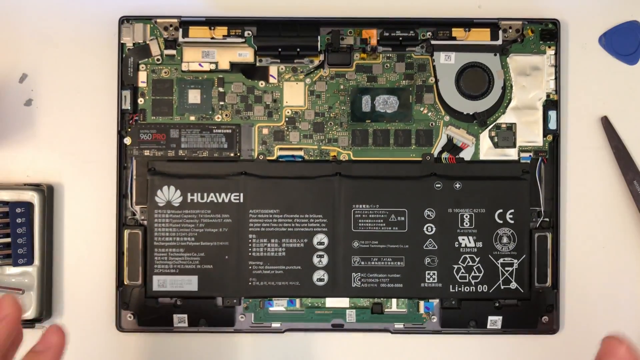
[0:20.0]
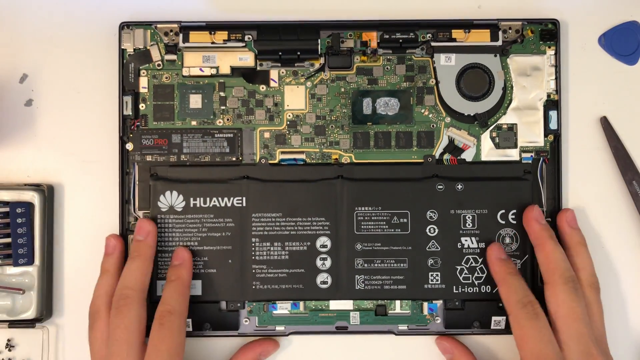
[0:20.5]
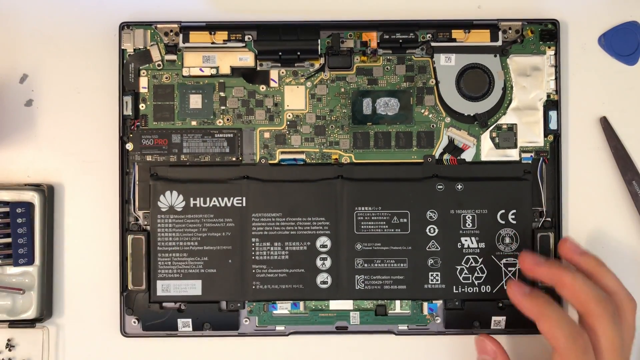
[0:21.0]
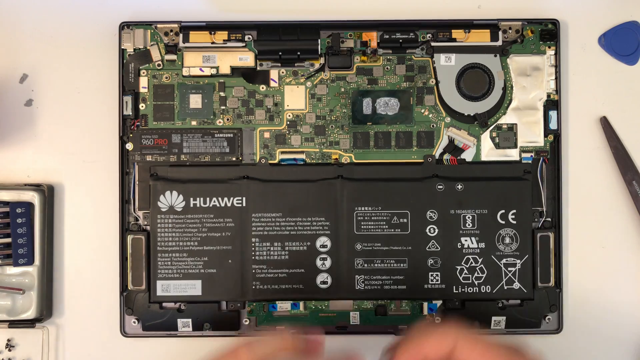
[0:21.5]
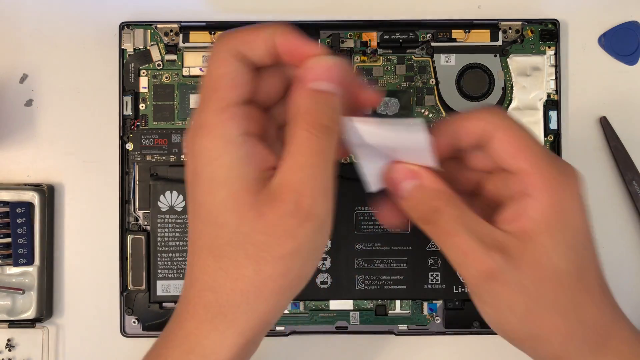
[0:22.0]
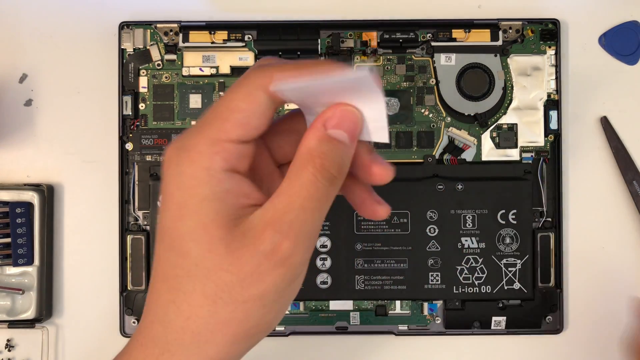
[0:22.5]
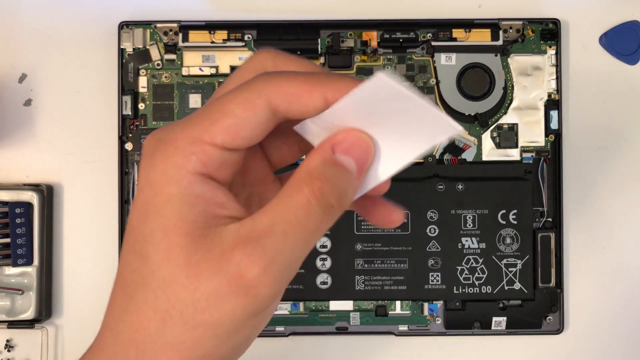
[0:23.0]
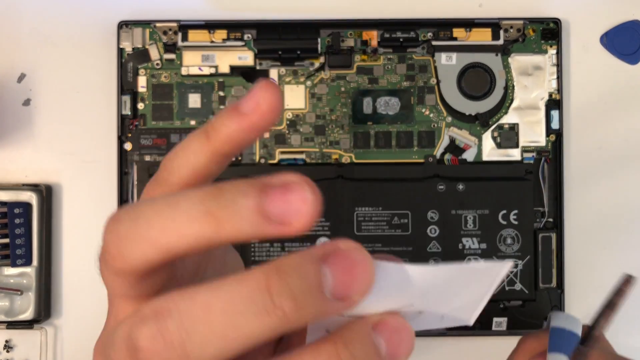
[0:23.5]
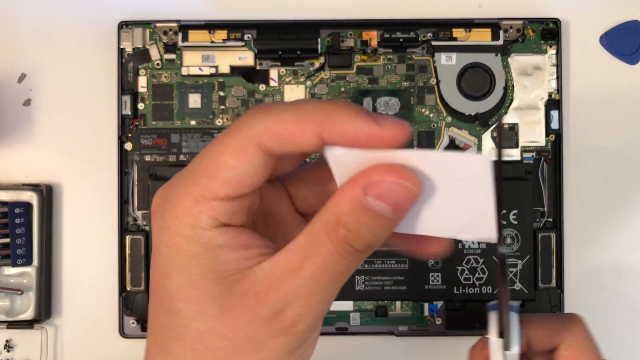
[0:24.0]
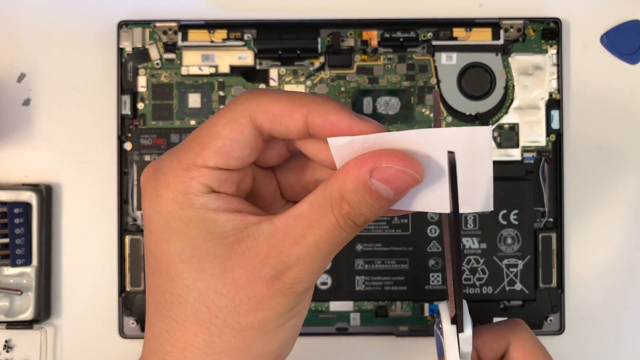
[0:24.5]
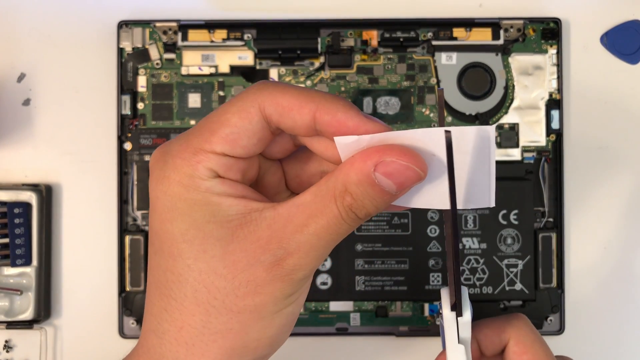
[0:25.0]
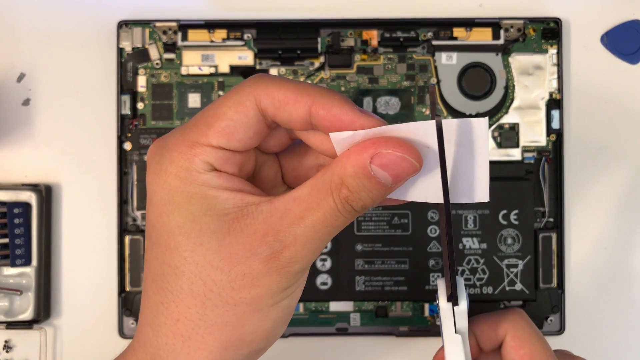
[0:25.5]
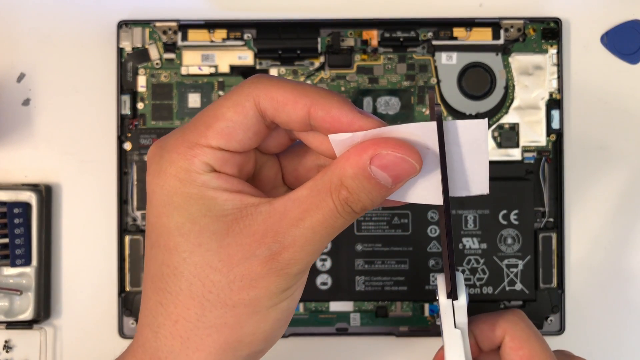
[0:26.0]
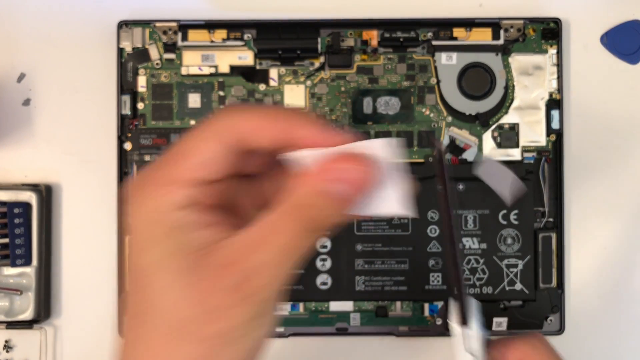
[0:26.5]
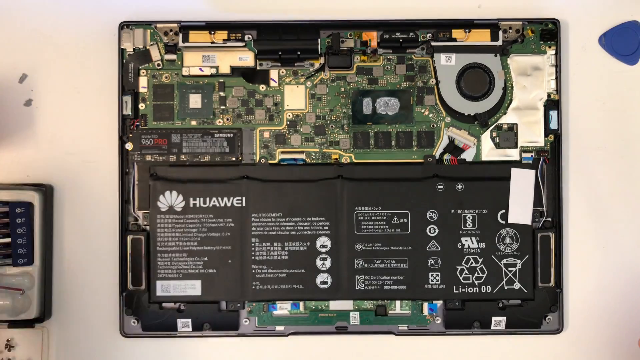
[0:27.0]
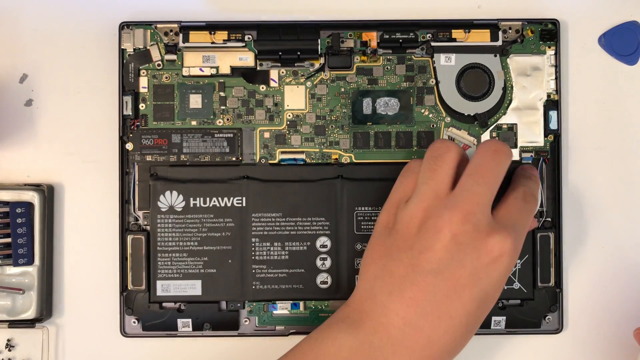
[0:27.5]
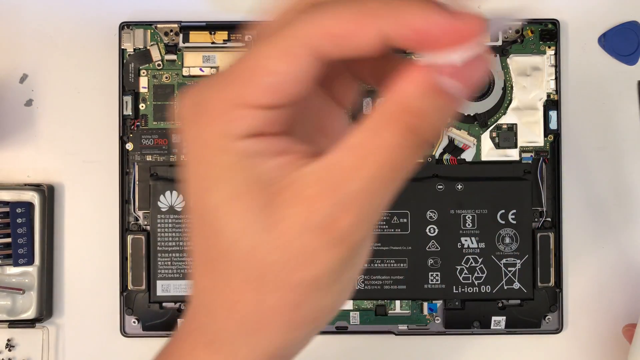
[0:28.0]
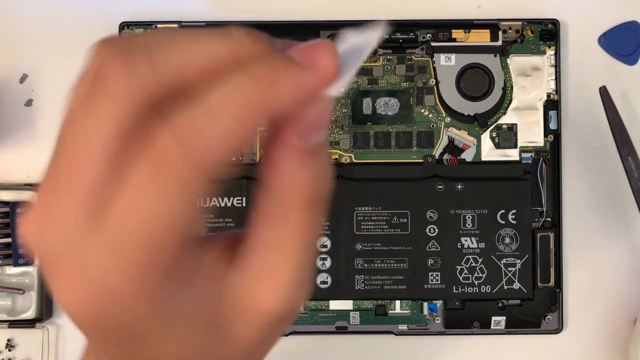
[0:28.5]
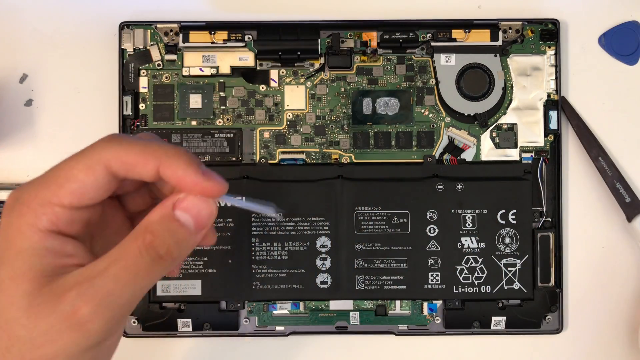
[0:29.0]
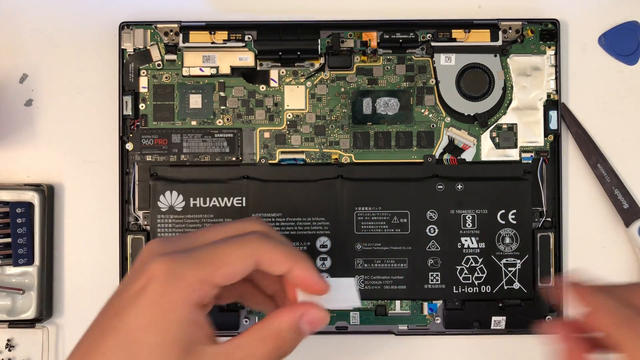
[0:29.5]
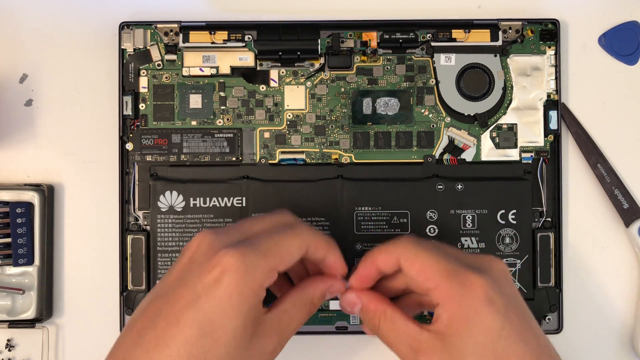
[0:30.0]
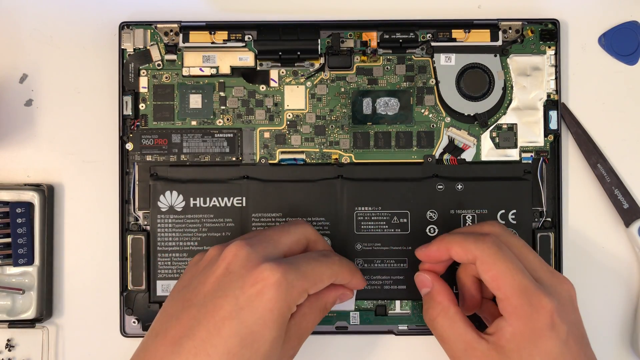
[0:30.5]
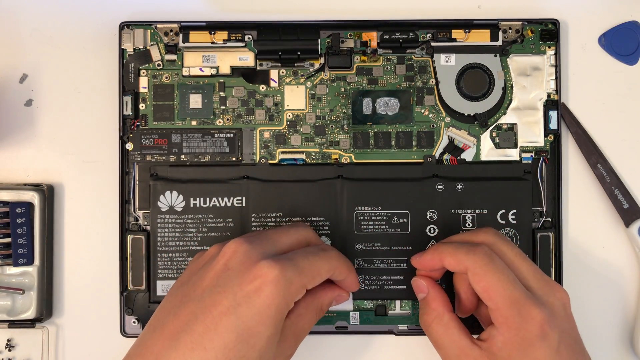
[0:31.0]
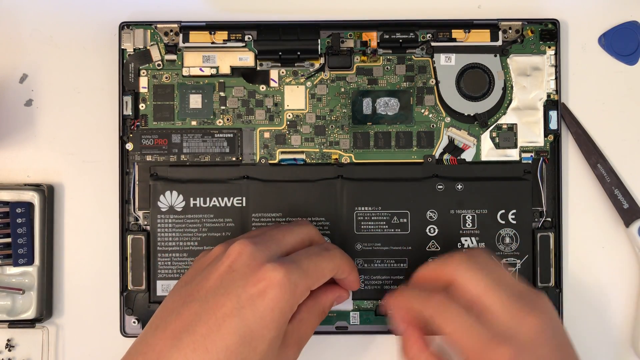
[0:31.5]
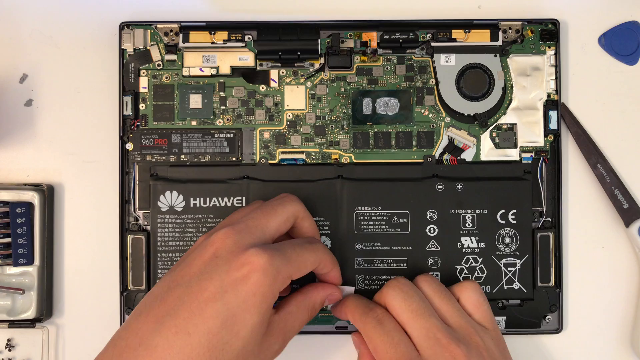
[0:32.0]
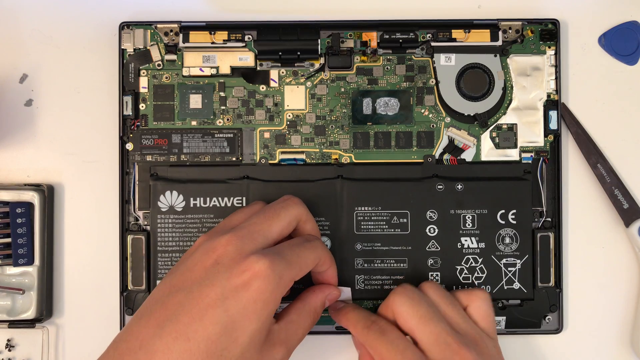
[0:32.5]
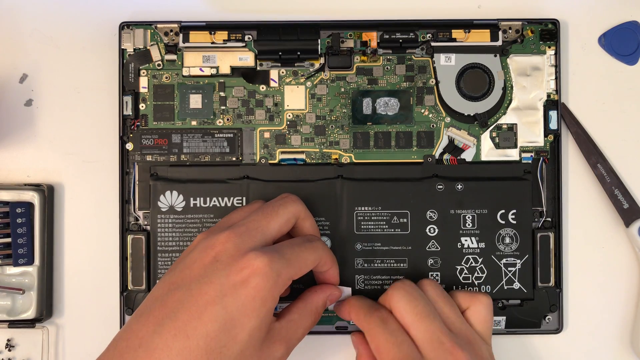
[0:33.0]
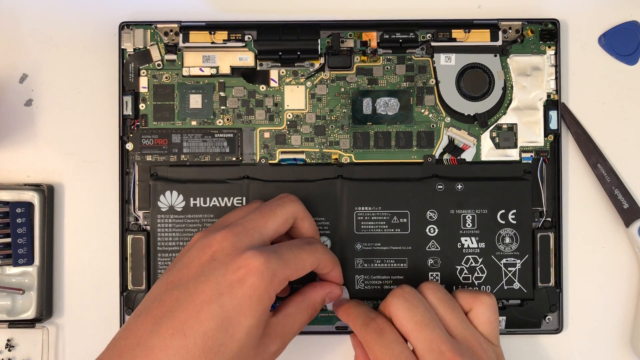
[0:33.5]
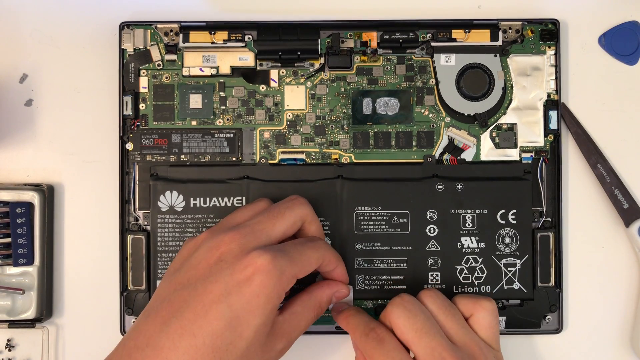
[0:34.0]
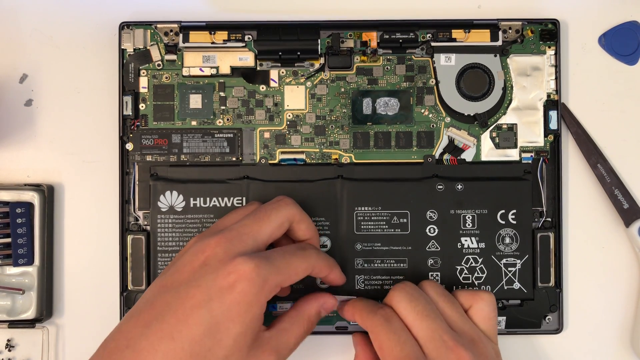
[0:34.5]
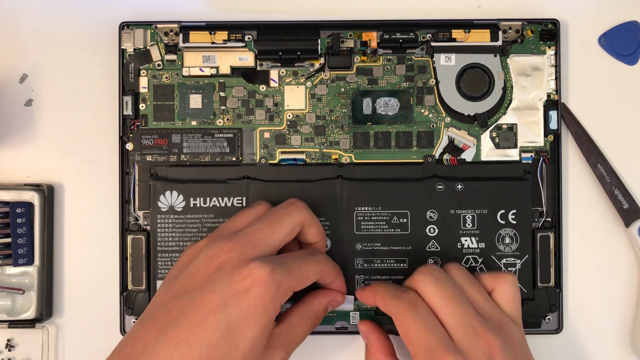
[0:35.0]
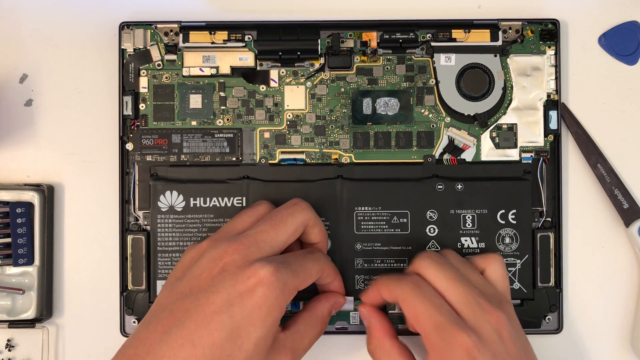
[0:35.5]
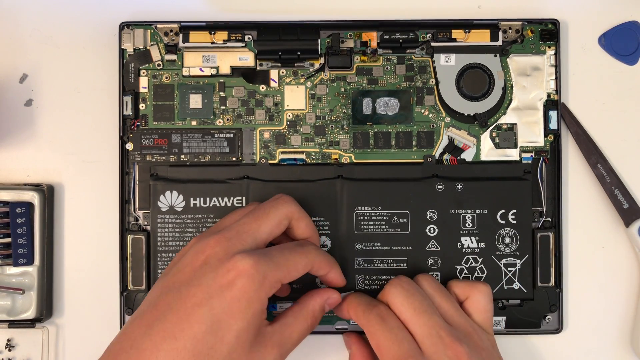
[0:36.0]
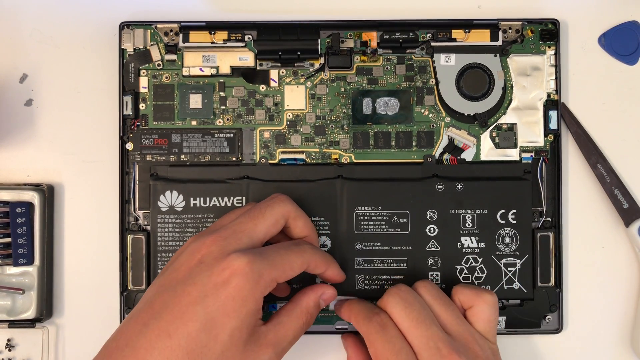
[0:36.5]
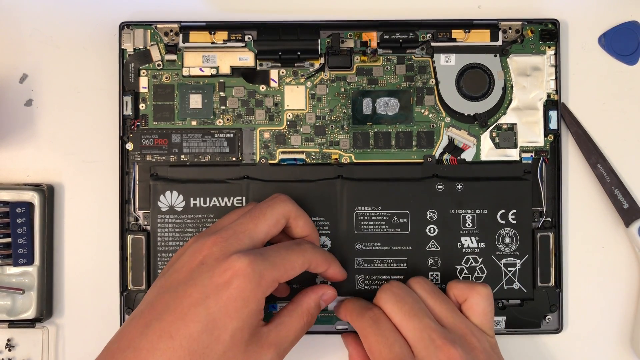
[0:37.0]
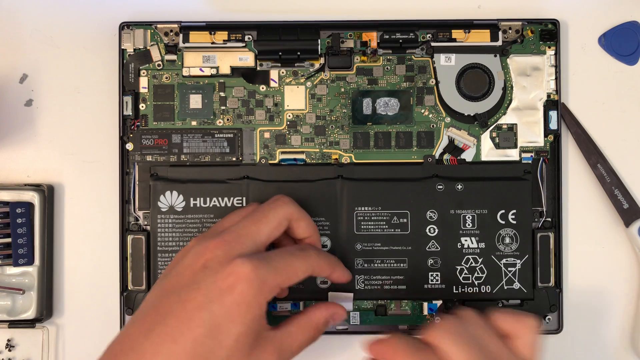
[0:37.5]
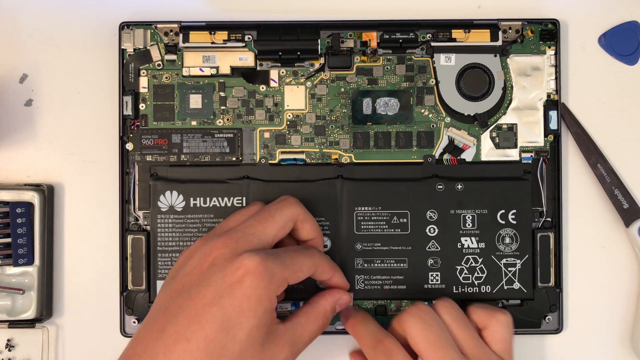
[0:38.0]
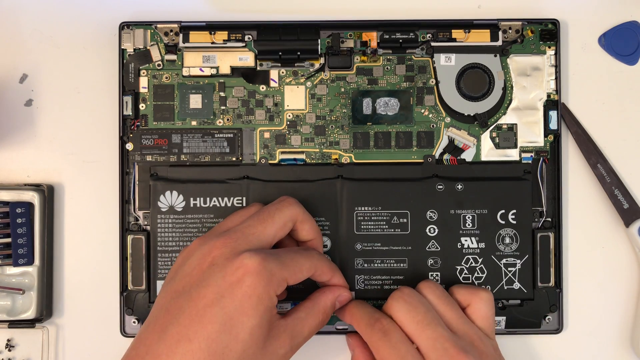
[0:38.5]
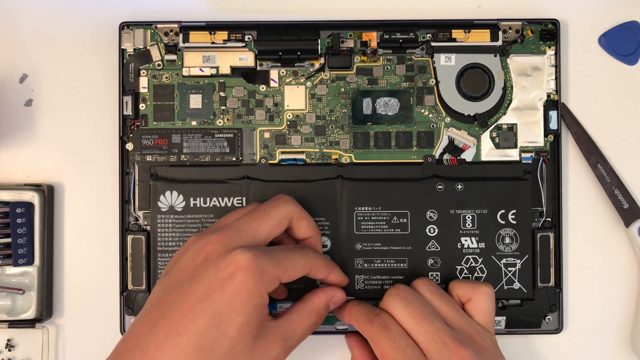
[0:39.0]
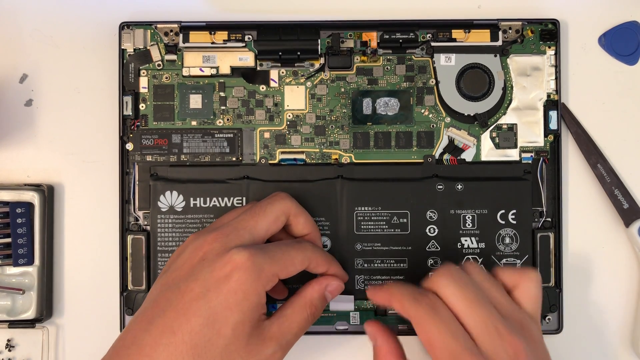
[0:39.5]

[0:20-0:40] A person records themselves sitting at a desk. On the desk is a computer missing the outer case on its top, with its electrical components and battery exposed. On the left side of the frame is some sort of gadget, and on the right side a blue triangle. The person picks up a white rectangular sheet of paper, touches it a few times and flips it over, then grabs the scissors on the right side of the frame and begins cutting pieces from the paper. They snip about a third of the paper away, and it falls on the computer's battery. They pick it up, hold it up toward the camera, and place it toward the center of the laptop, between panels of electrical components. It ends up just below the battery, which says "Huawei", with the paper sticking out.